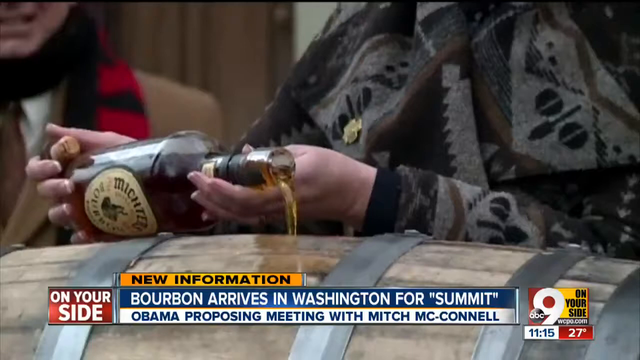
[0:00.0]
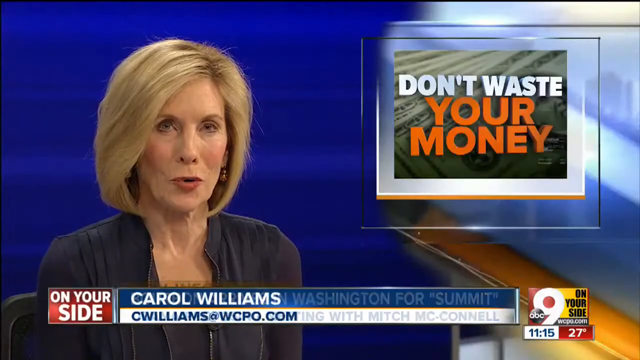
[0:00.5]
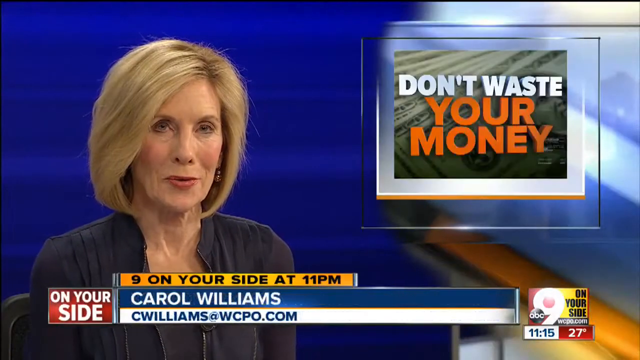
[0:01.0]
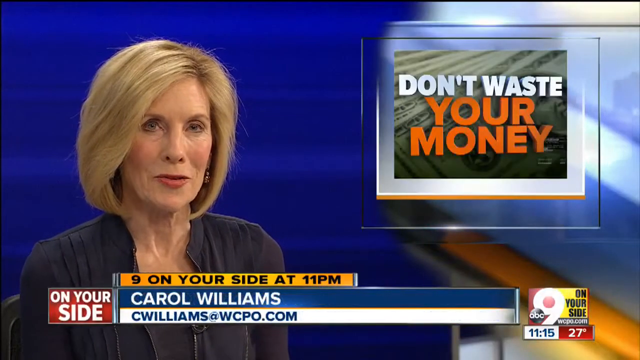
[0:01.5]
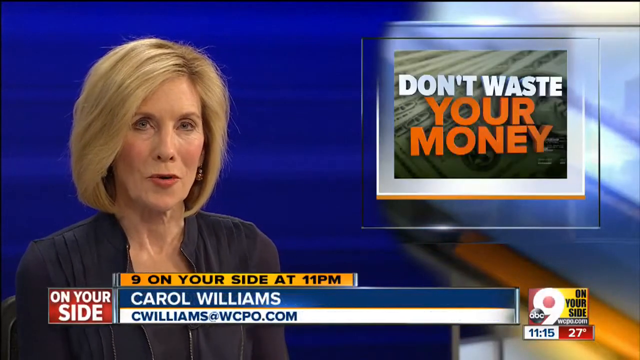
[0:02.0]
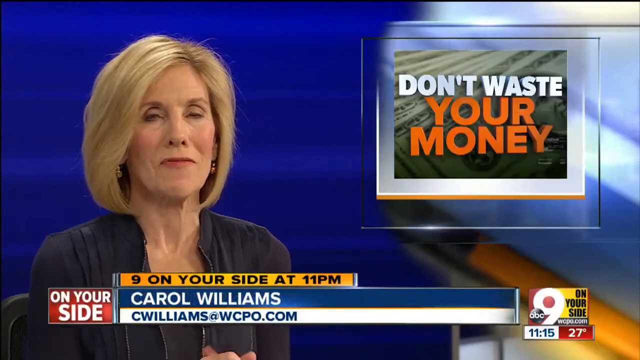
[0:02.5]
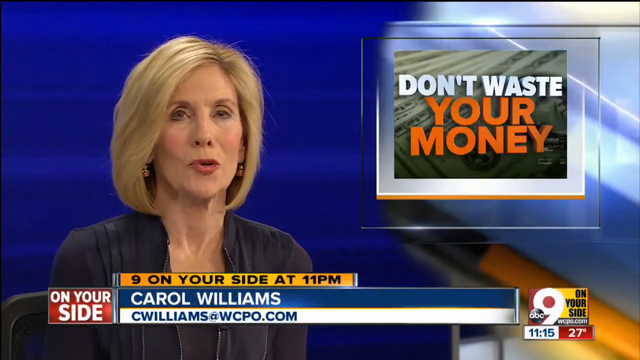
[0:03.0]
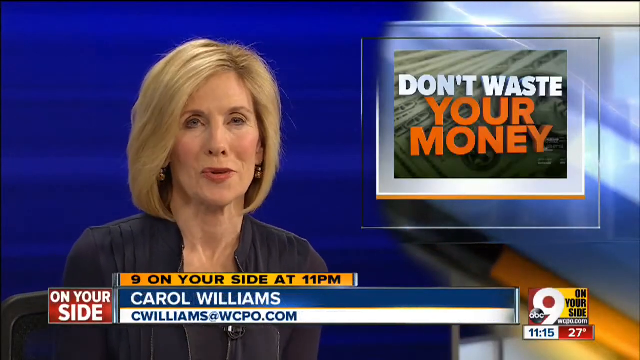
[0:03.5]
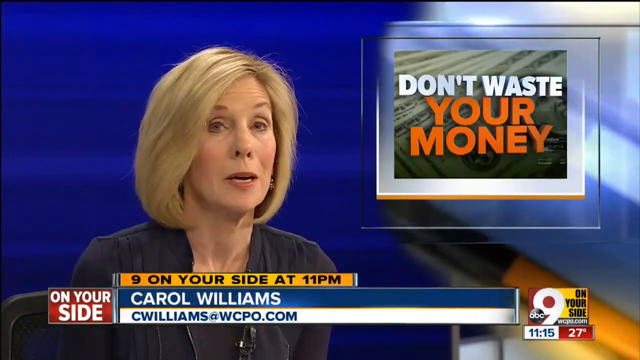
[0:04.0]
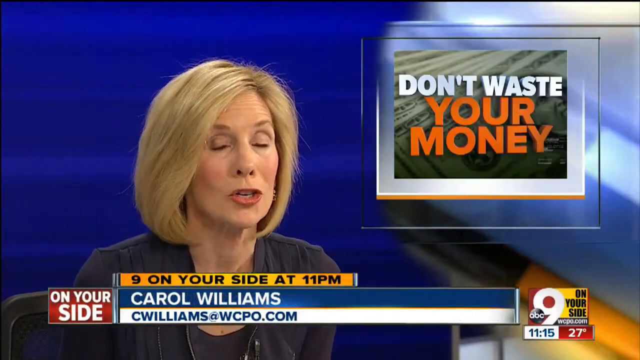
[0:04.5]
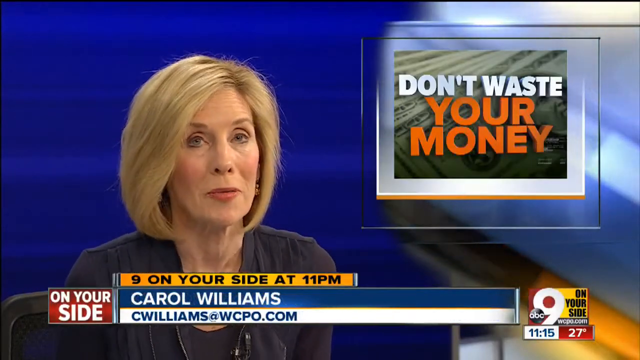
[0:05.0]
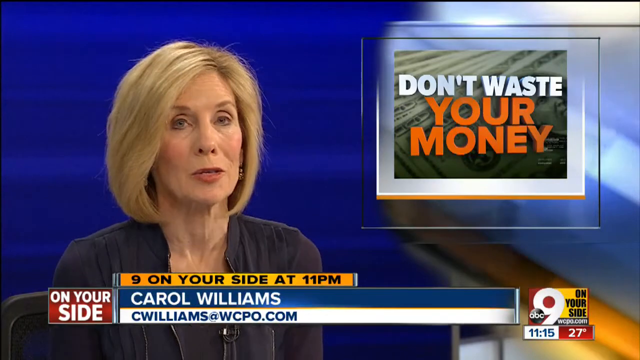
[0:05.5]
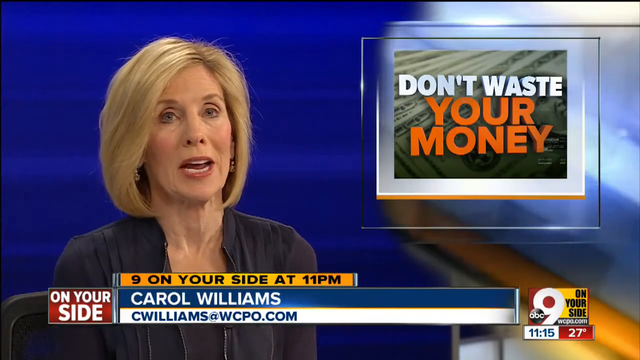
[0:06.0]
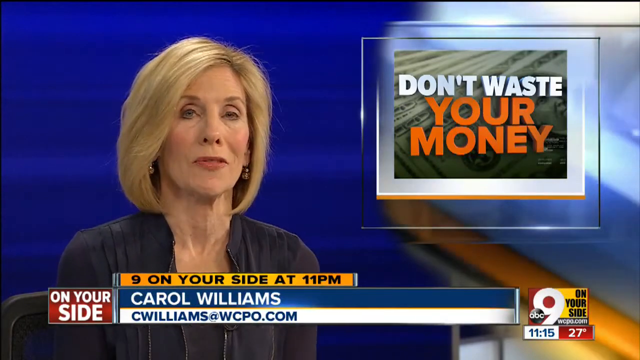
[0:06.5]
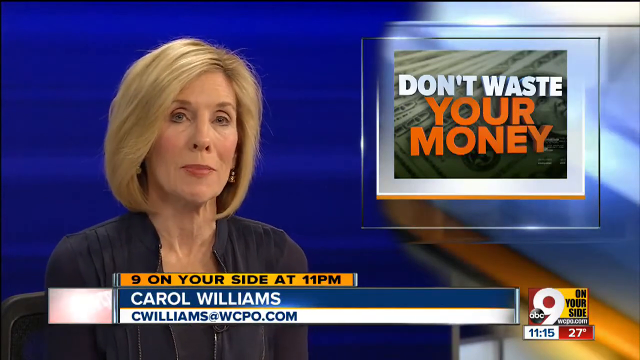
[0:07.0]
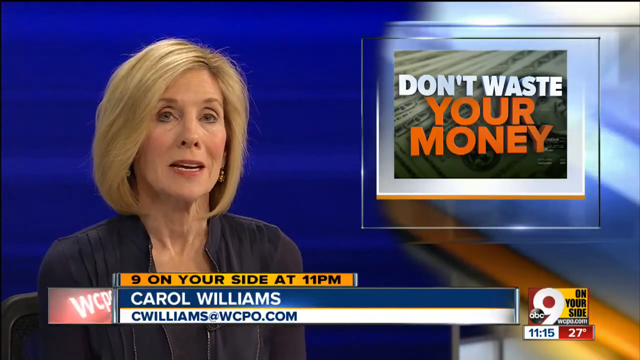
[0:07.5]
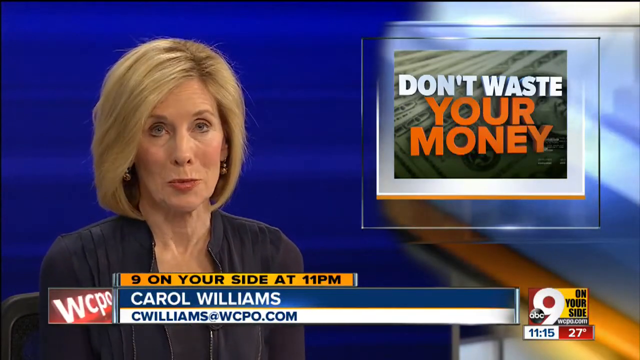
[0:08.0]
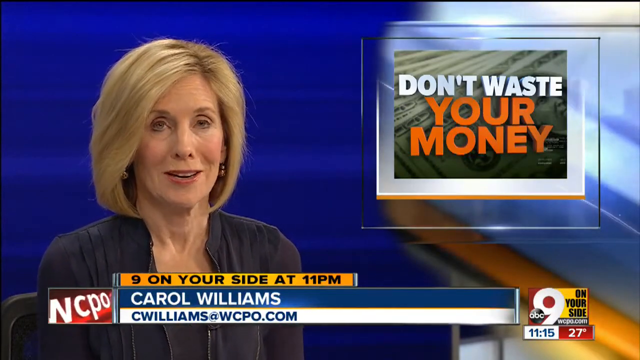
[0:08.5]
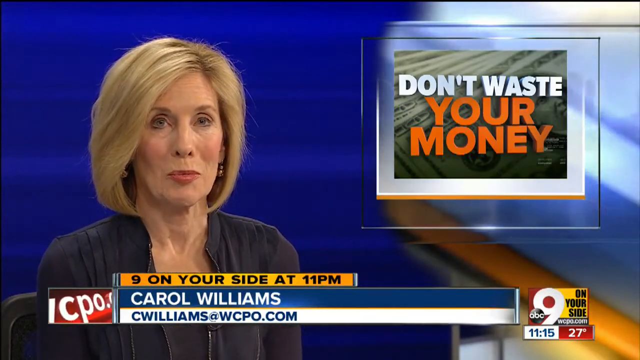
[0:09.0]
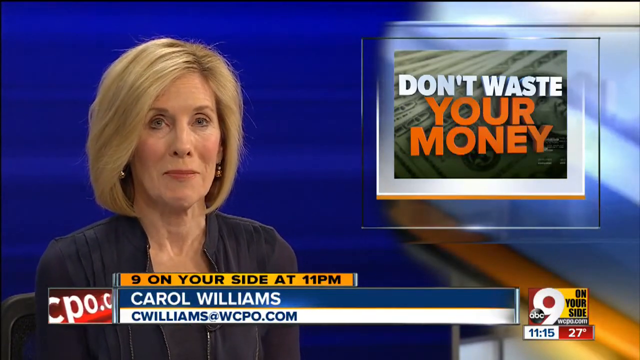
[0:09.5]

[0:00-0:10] A woman with short blond hair reports the news on TV. Text on the screen reads "don't waste your money," apparently the headline of the story. A man is holding a bottle, seemingly a bottle of beer.